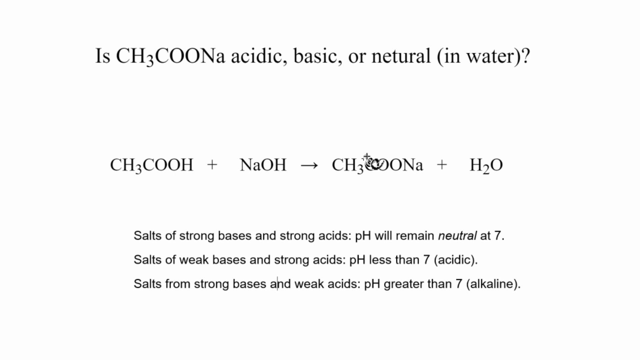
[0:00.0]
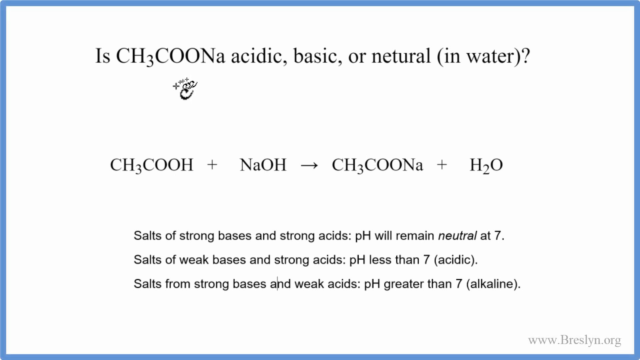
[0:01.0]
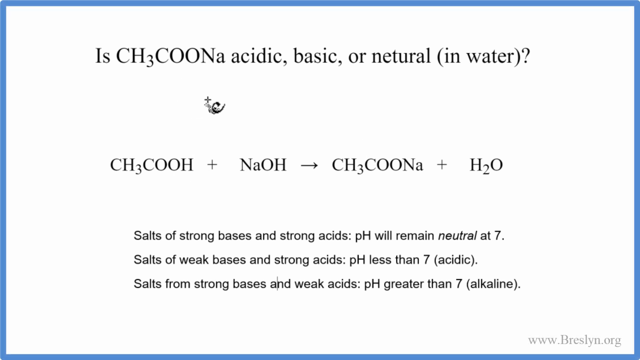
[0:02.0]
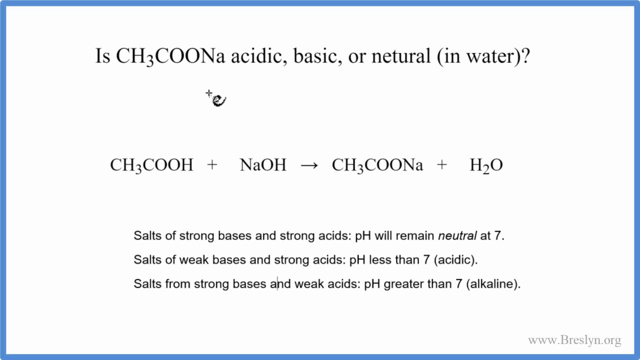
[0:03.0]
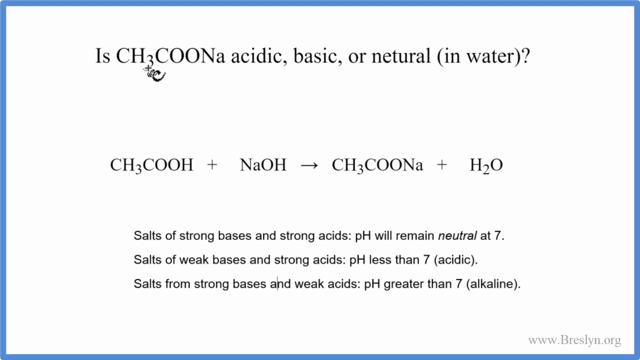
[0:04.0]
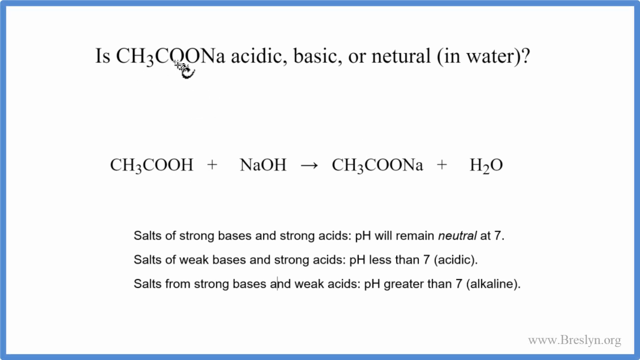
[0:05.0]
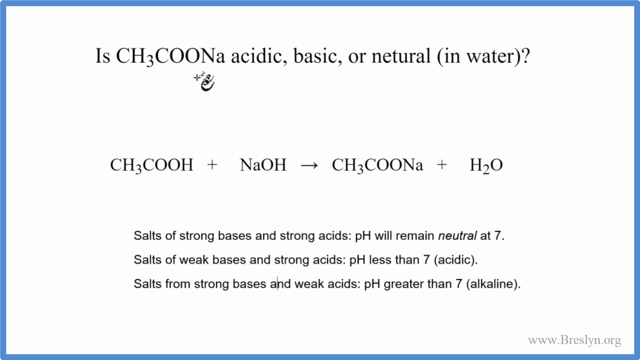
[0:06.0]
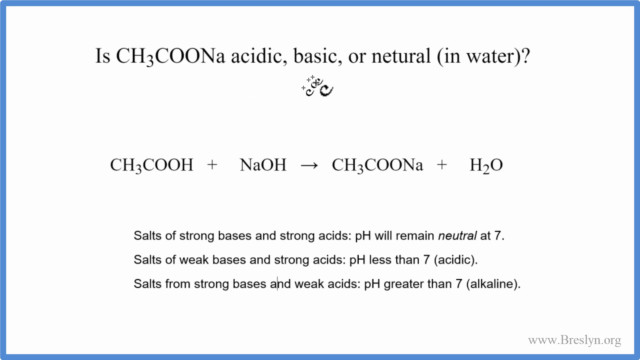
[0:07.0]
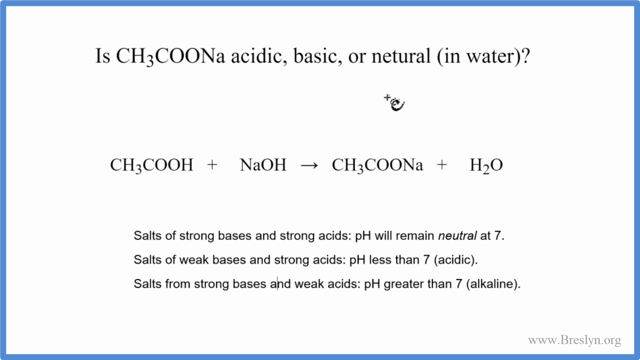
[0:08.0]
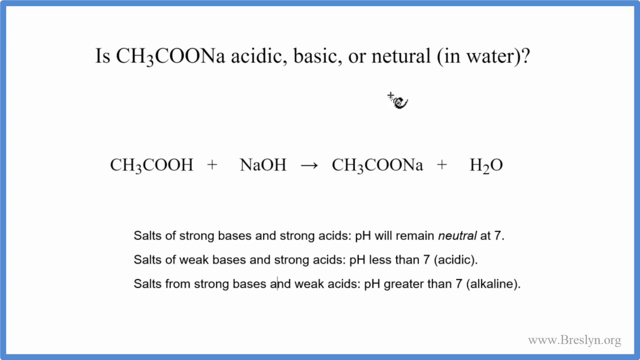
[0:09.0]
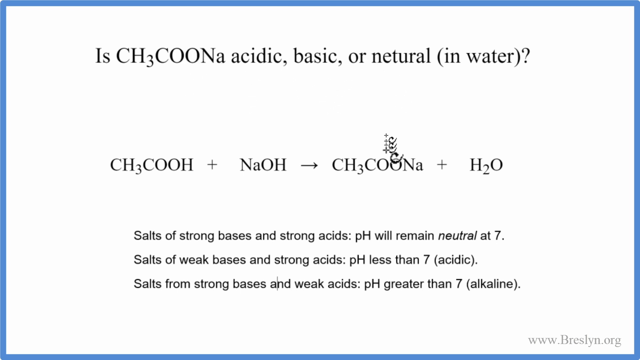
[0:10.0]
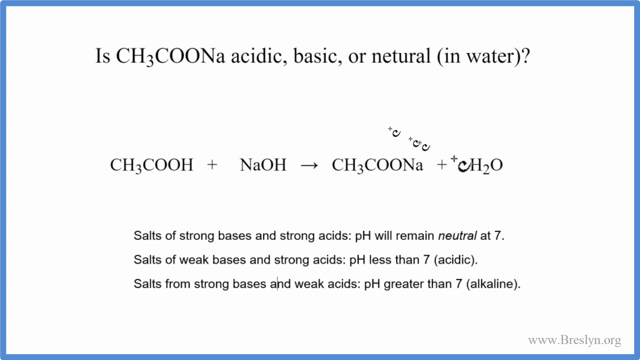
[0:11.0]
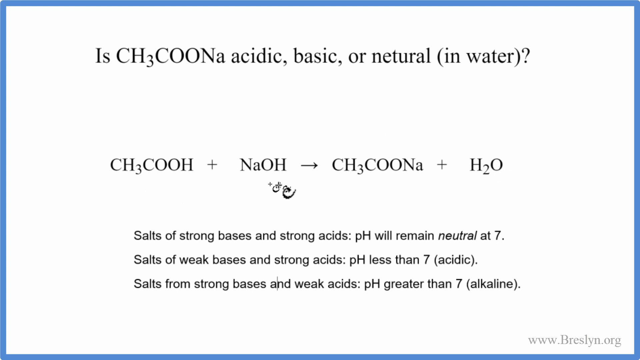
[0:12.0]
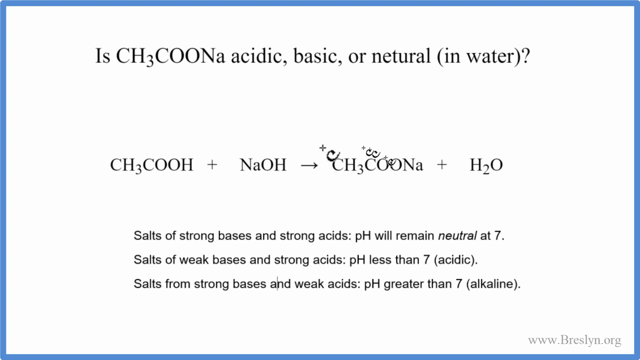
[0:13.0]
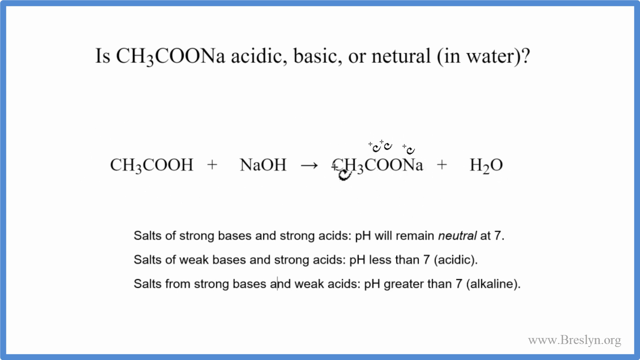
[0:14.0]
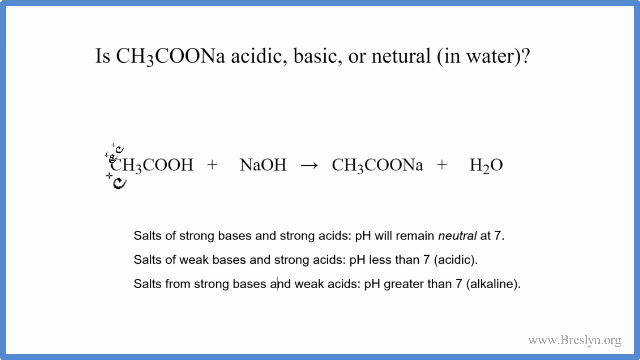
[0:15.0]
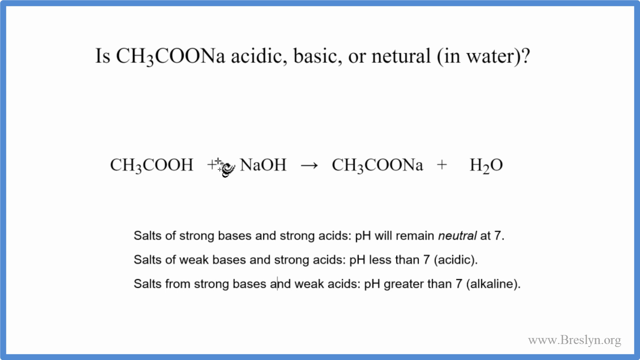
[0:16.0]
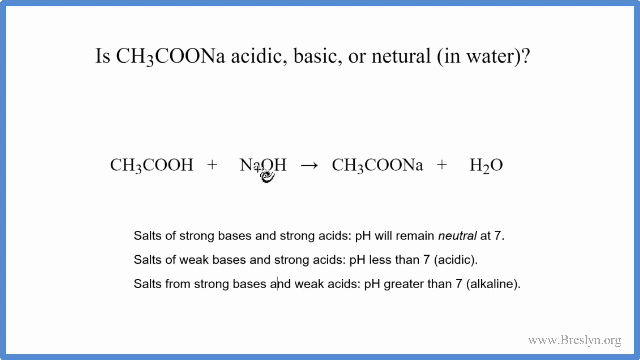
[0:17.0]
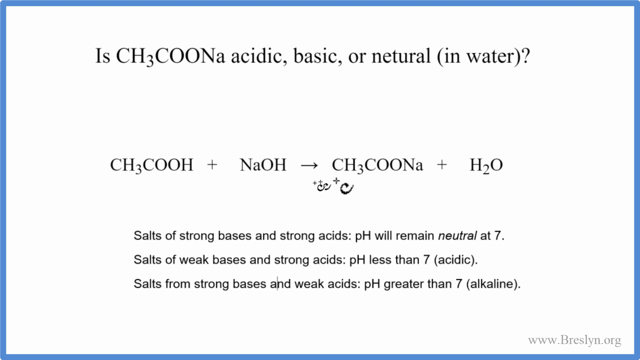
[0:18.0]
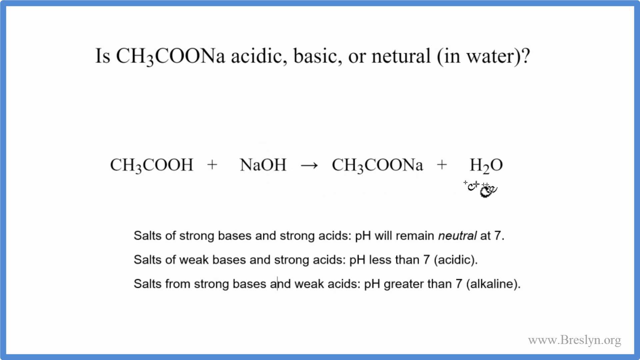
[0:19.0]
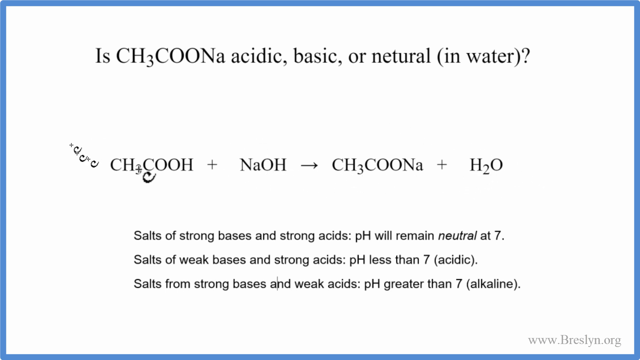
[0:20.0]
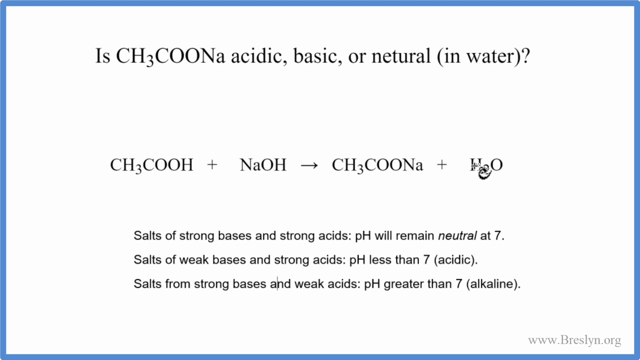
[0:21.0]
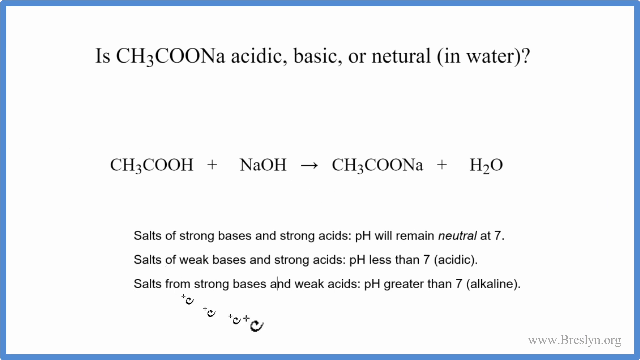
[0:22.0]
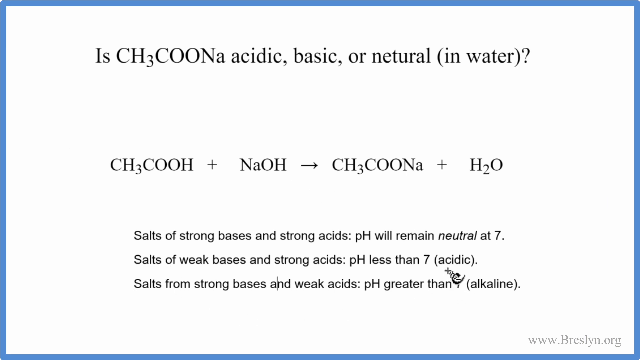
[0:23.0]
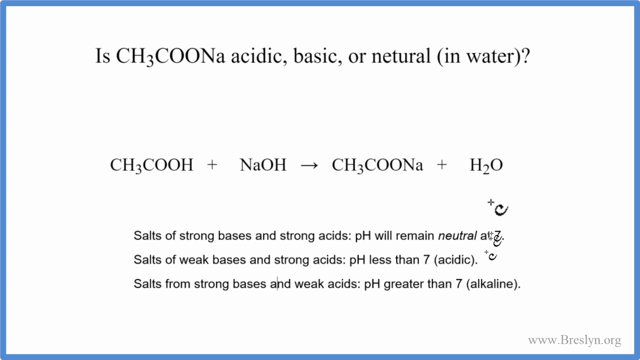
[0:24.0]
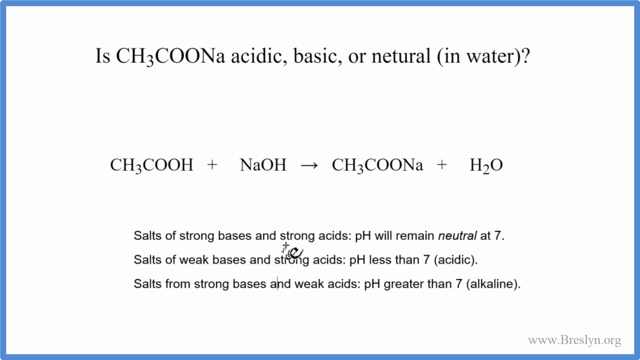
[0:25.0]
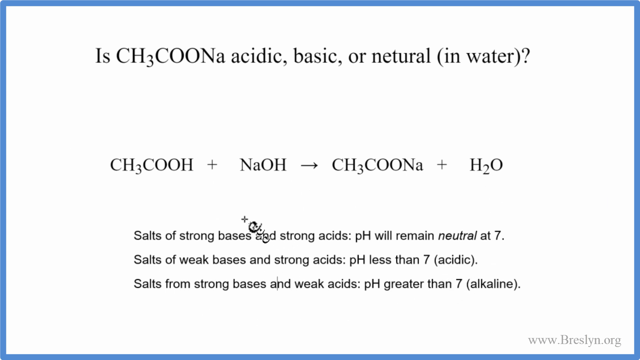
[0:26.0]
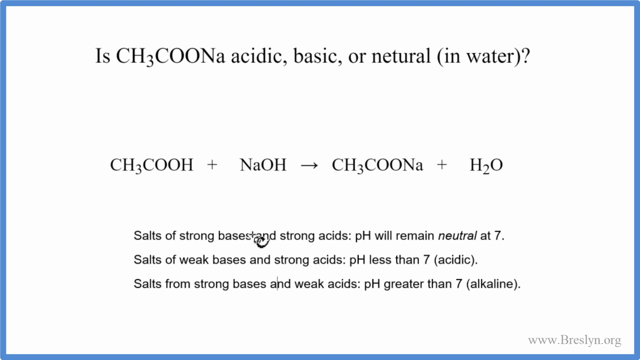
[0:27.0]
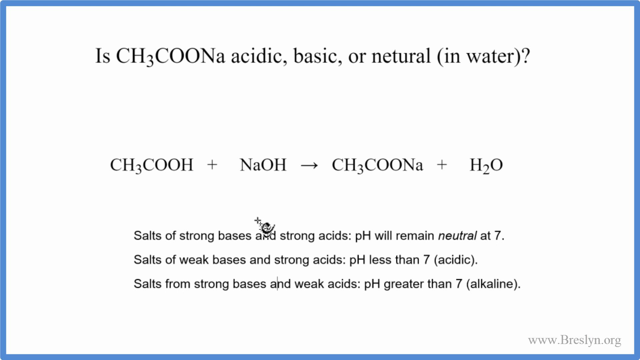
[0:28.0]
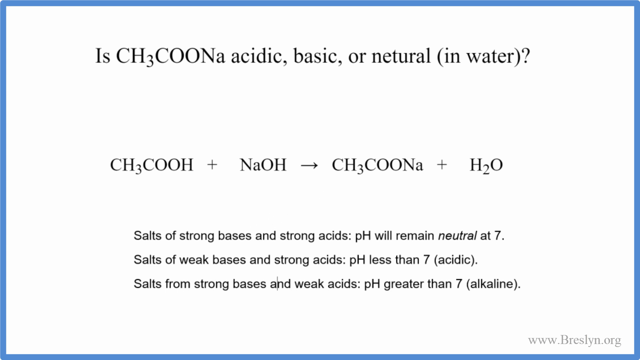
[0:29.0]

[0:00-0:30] A slide poses a question about whether the chemical CH3COONA is acidic, basic or neutral in water. Below it is a formula: CH3COOH + NaOH = CH3COOH + H2O. Text then sets out the rules: salts of strong bases and strong acids have a pH that remains neutral at 7; salts of weak bases and strong acids have a pH less than 7; and a pH greater than 7 is alkaline. The content is an online chemistry class, an explanatory video about the compound CH3COONA and how its pH varies in water depending on what is added.